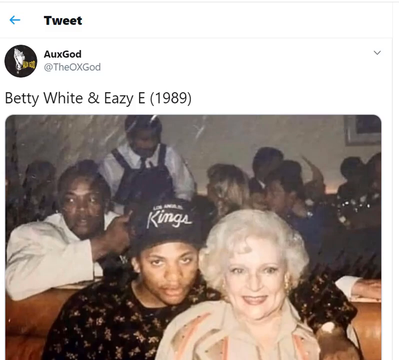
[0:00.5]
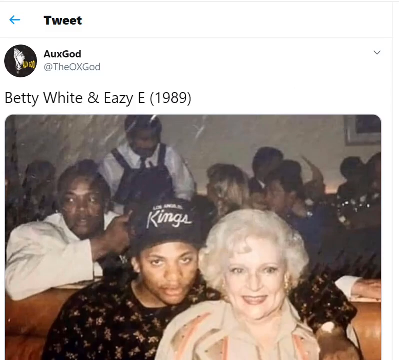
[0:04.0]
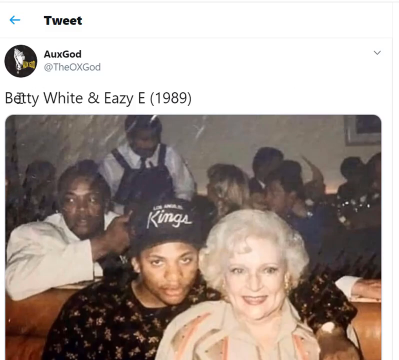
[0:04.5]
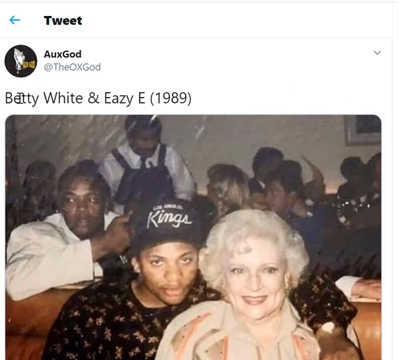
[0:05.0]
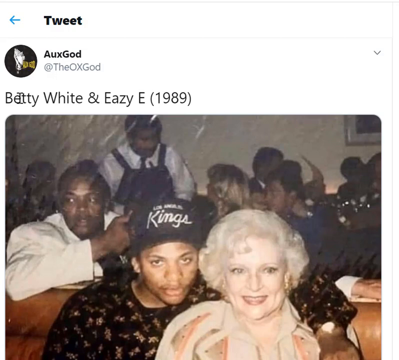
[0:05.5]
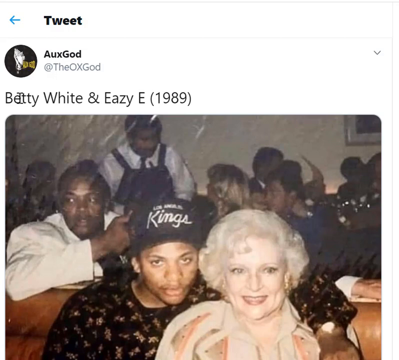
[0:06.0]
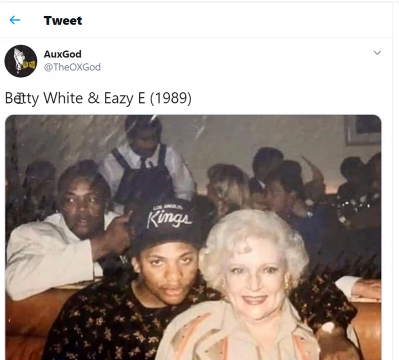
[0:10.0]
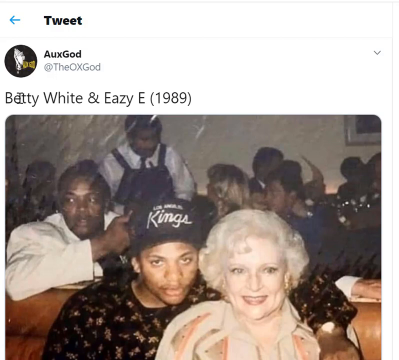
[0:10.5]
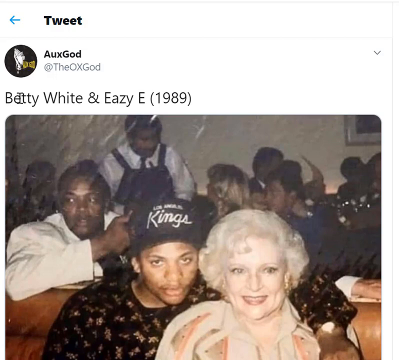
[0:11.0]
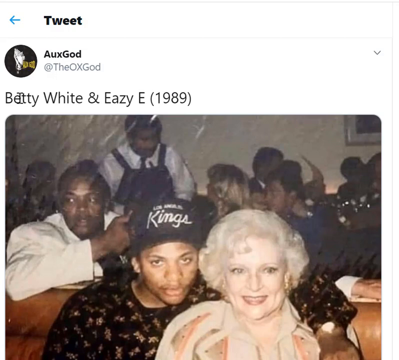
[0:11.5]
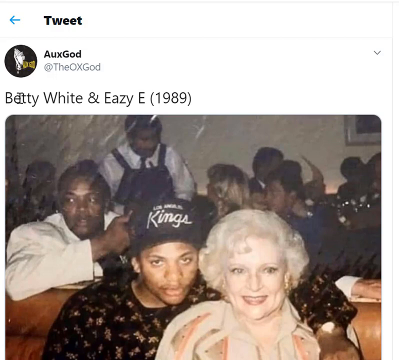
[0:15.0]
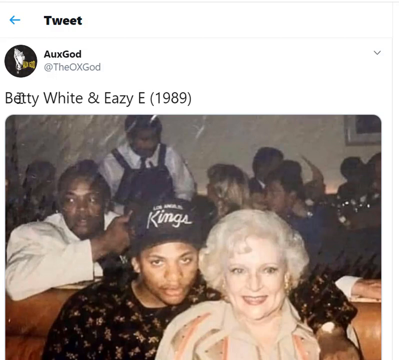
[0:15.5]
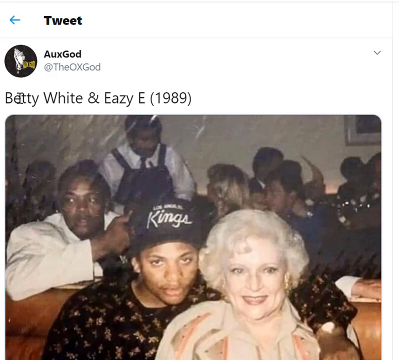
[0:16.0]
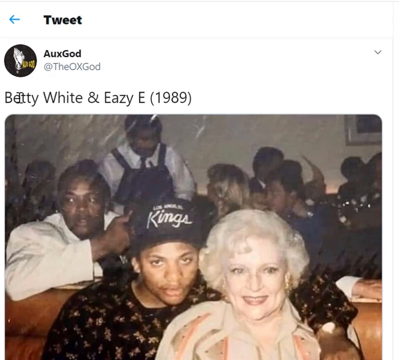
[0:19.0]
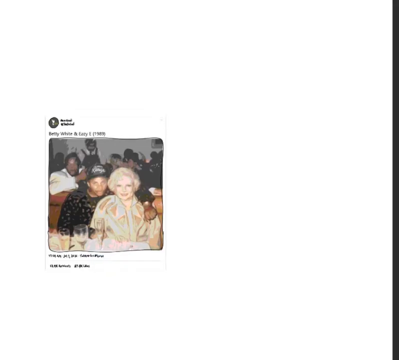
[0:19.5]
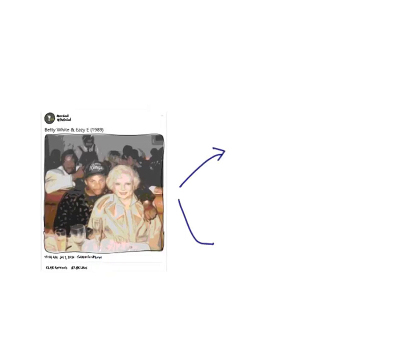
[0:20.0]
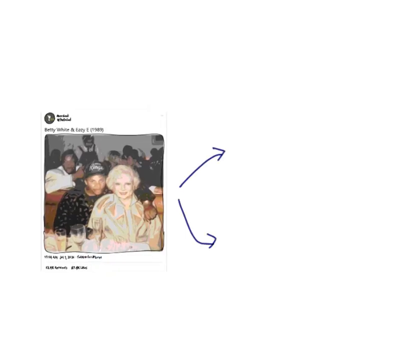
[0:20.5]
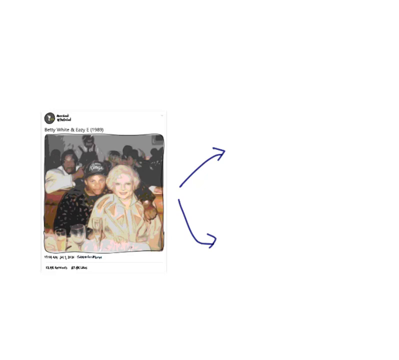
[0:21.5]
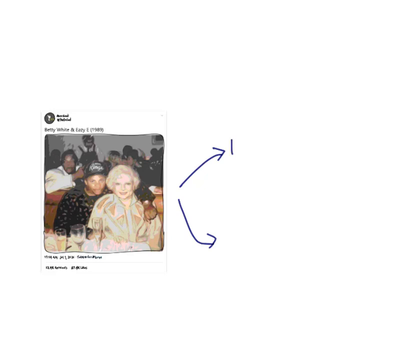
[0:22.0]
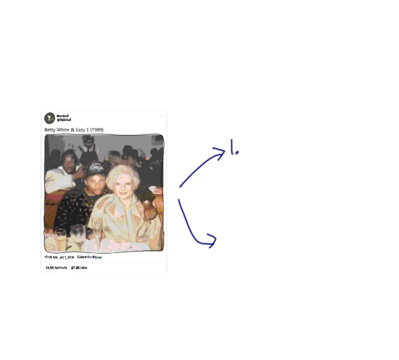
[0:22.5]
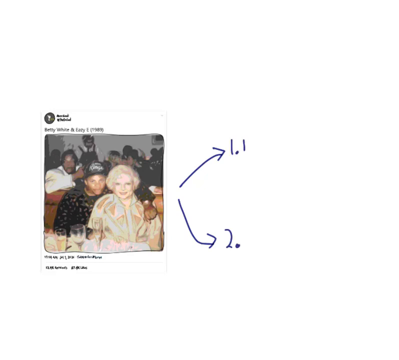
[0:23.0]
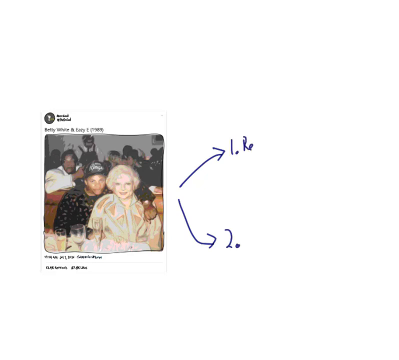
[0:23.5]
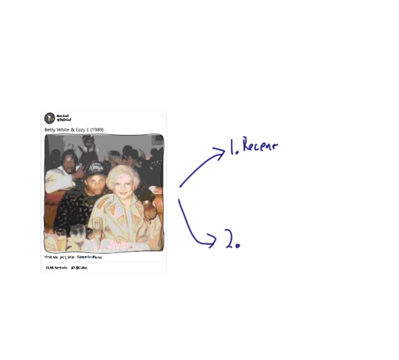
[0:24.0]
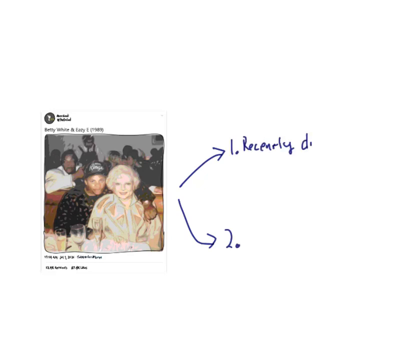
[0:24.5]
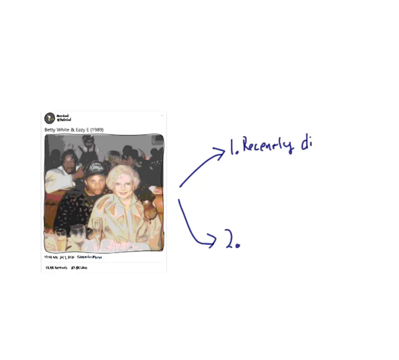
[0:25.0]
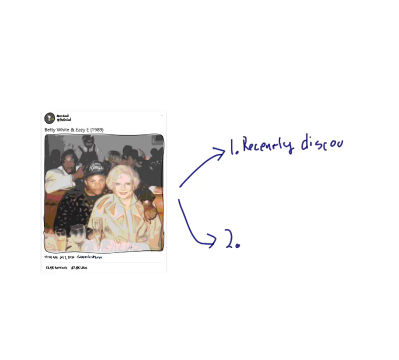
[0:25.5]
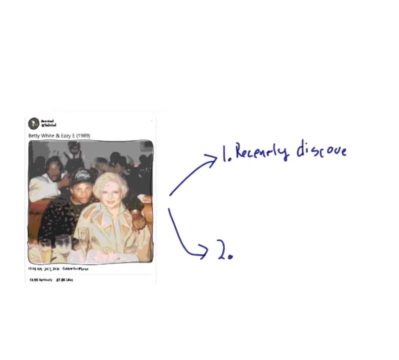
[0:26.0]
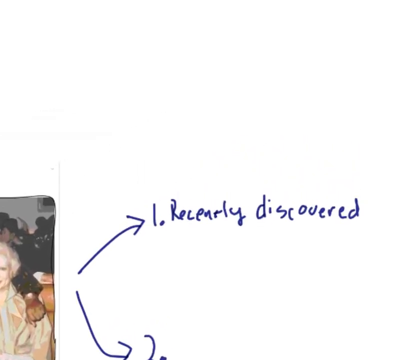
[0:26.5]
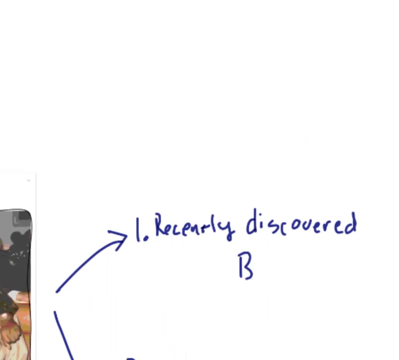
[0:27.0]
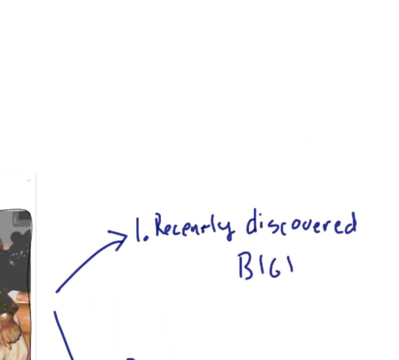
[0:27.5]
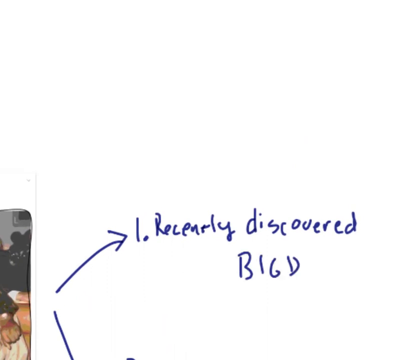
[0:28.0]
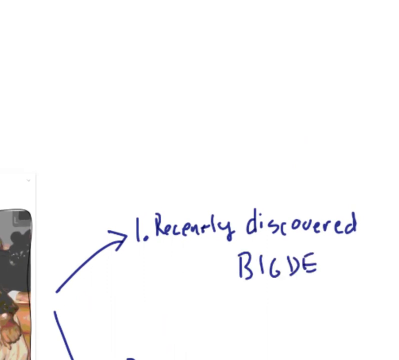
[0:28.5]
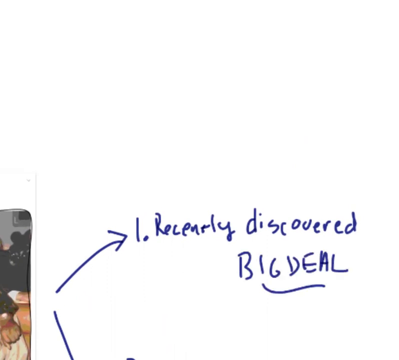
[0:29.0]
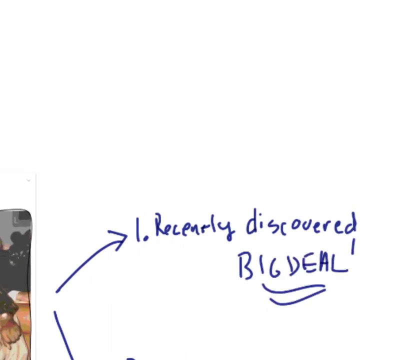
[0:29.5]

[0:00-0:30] The video opens on a still of a tweet against a white background. A top border comes down about a third of the way, with a thin border down the left and right sides and across the bottom. In the top left is a blue arrow pointing left, and to its right, in bold black, is the word "tweet". Beneath that is a profile picture on the left, the name "Ox God", and under it "@theOxGod". Below, in black text, it reads "Betty White and Easy E, 1989". Under the text is an old, blurry picture. Easy E is in the center facing the front, wearing a black Kings hat and a black shirt with small designs that are hard to make out. To his left is Dr. Dre, kind of behind the couch Easy E is sitting on, wearing a white sports coat, facing forward and looking off to the left. More people are scattered across the background: a chef stands just to the right of Dre, and everyone else is sitting down, in front of a white wall. To the right of Easy E is Betty White, superimposed into the picture, with short white hair, red lipstick and a white shirt. A cursor moves to Betty and hovers there for a moment. The video then cuts to a white background with the image made very small on the left side, centered vertically. Two blue arrows come off its right side, one angling up and one angling down. At the top it says "1." and "recently discovered", and the view zooms in on this, showing "big deal" underlined twice with two exclamation points.